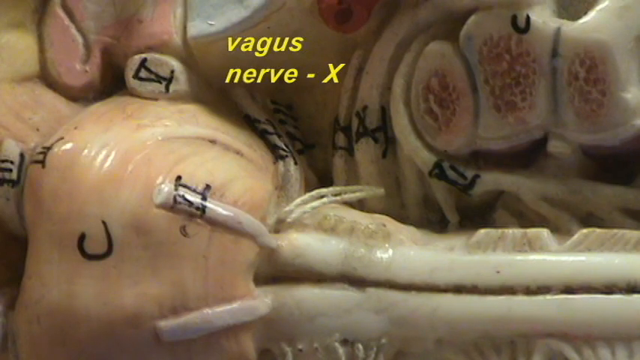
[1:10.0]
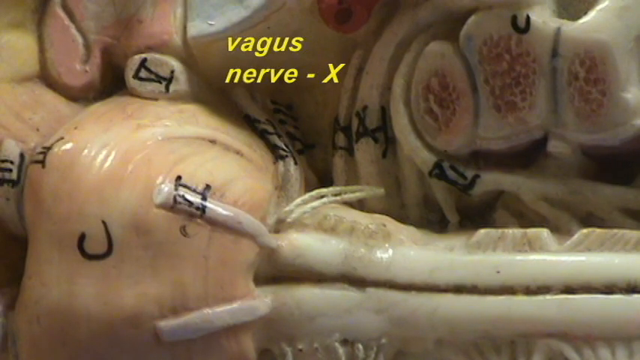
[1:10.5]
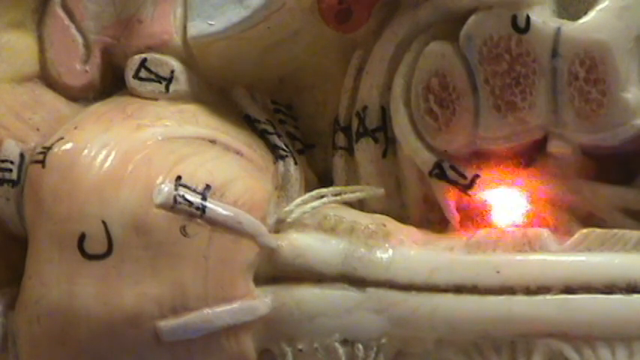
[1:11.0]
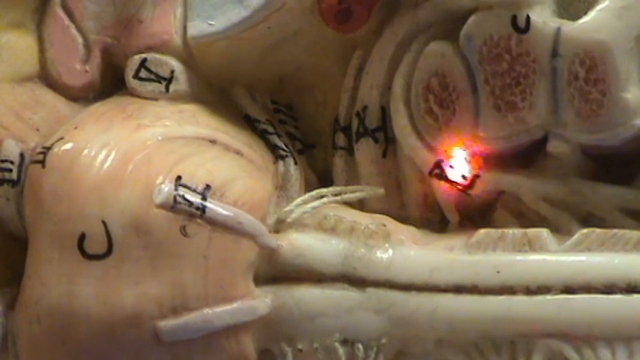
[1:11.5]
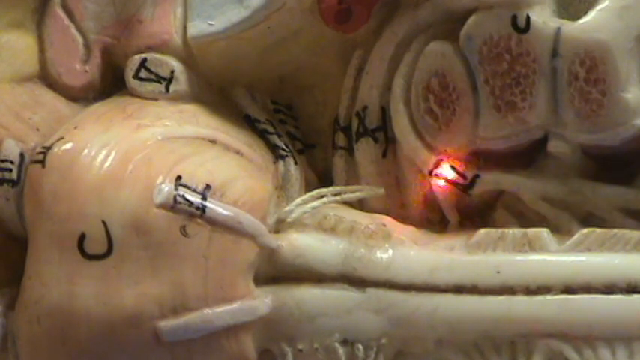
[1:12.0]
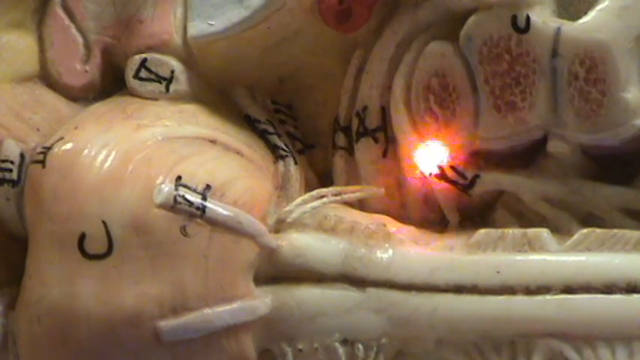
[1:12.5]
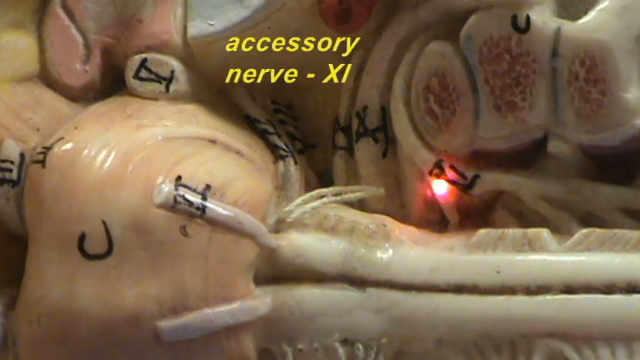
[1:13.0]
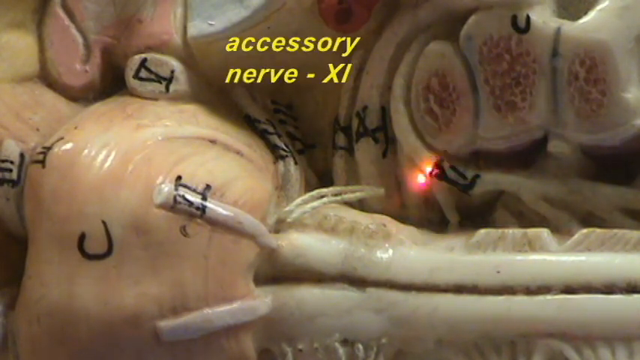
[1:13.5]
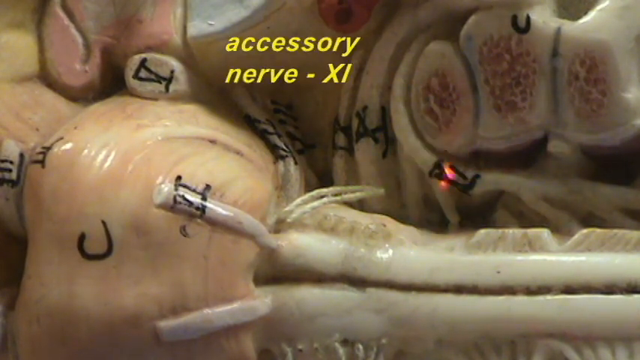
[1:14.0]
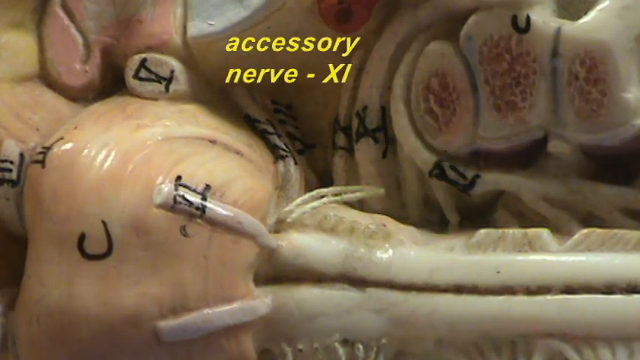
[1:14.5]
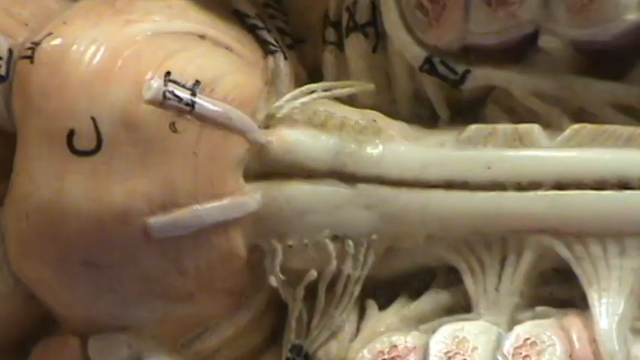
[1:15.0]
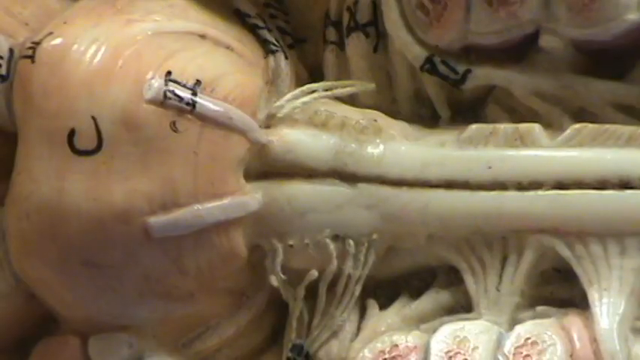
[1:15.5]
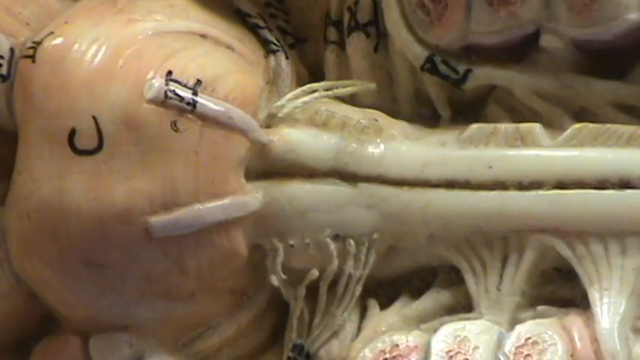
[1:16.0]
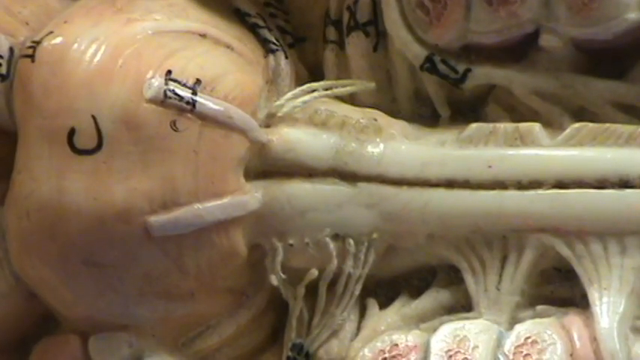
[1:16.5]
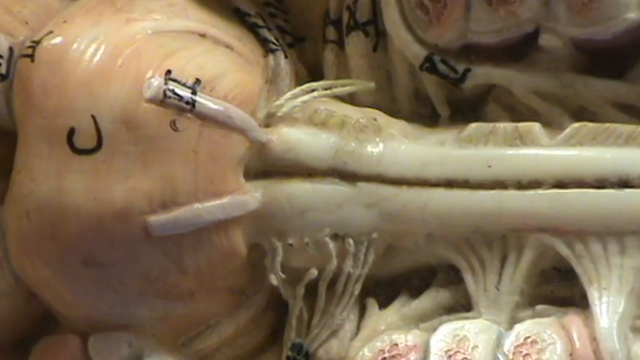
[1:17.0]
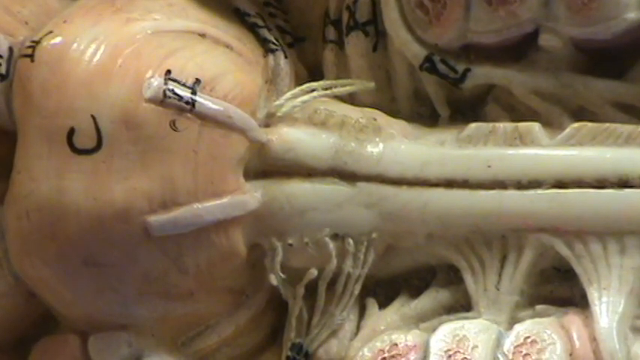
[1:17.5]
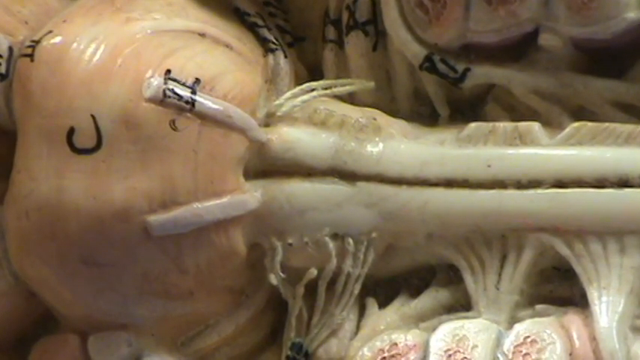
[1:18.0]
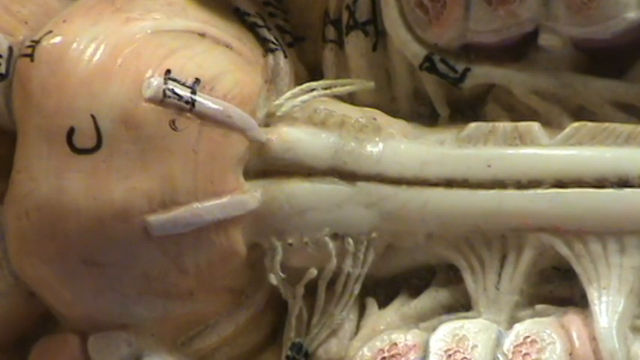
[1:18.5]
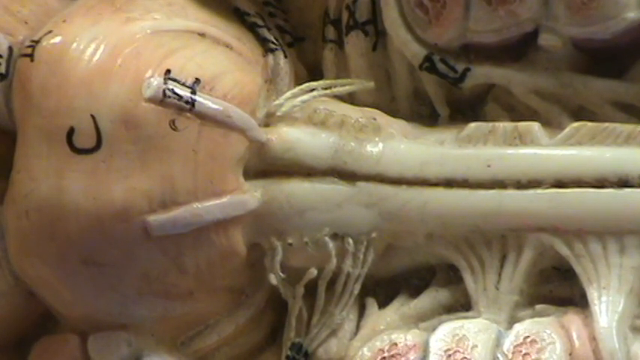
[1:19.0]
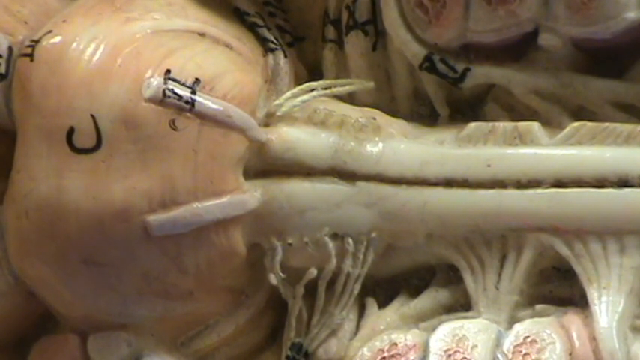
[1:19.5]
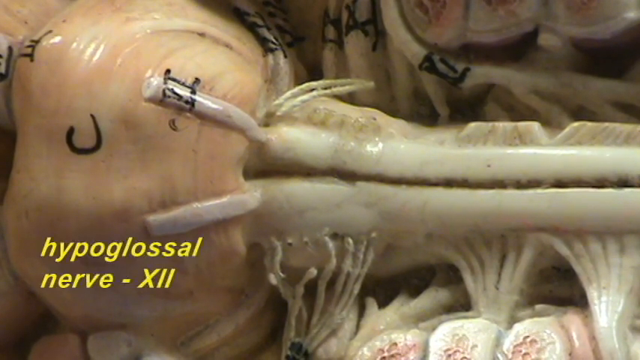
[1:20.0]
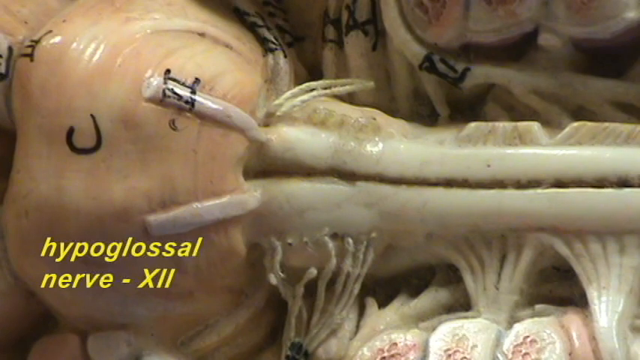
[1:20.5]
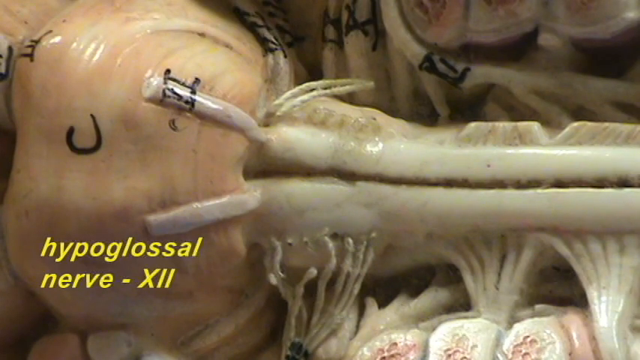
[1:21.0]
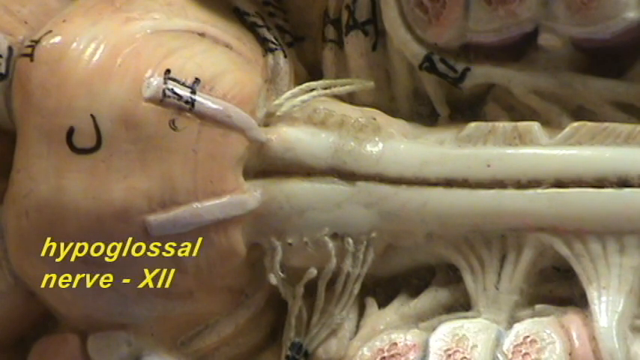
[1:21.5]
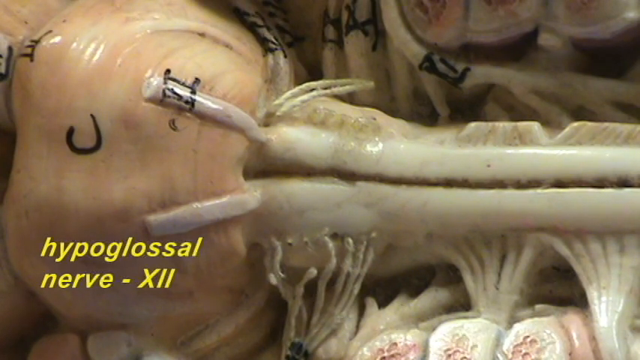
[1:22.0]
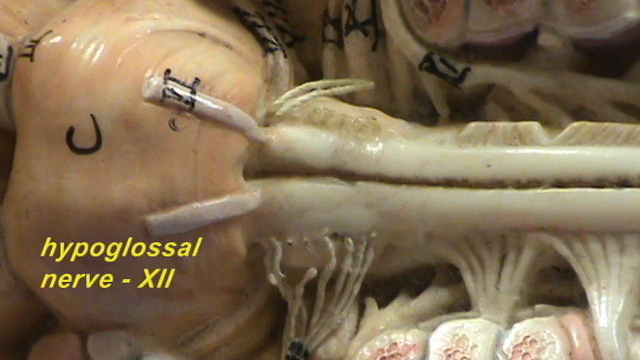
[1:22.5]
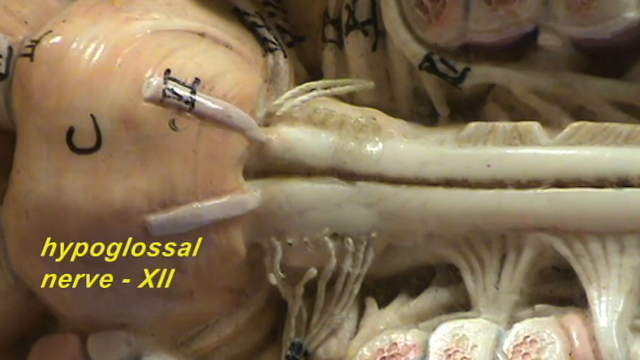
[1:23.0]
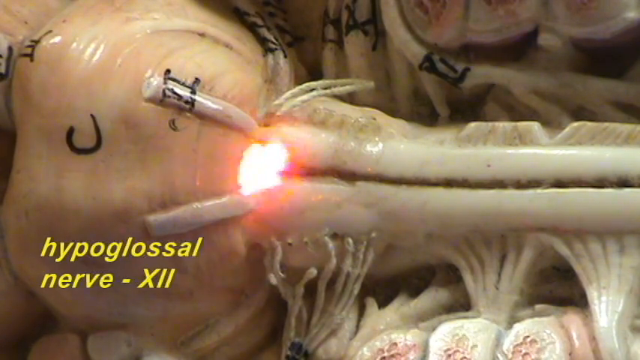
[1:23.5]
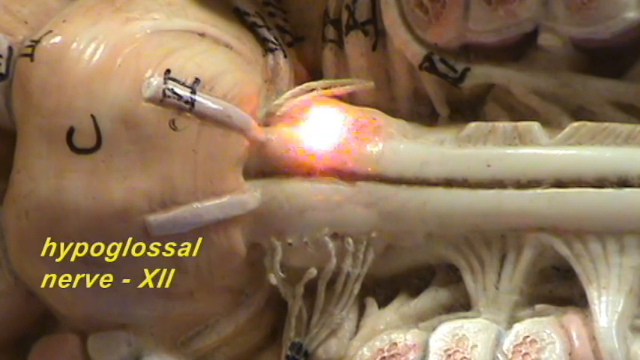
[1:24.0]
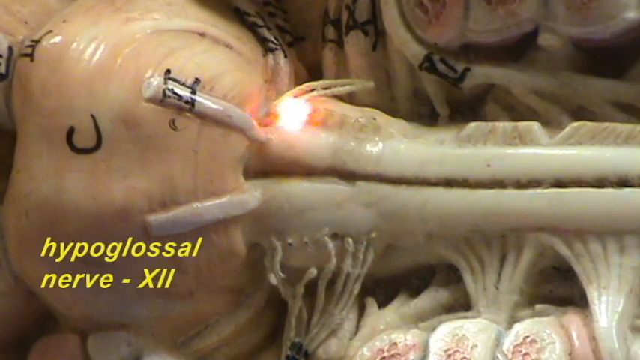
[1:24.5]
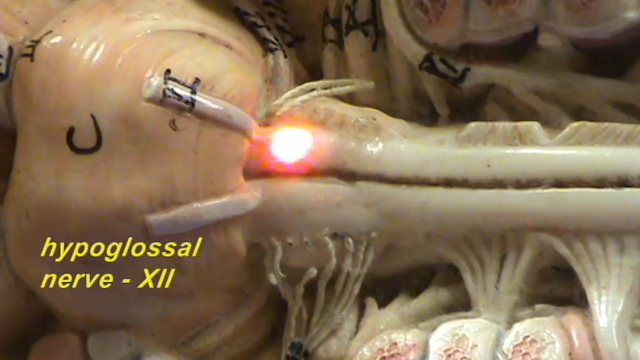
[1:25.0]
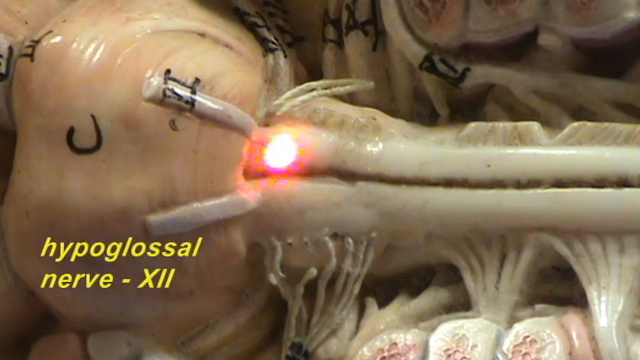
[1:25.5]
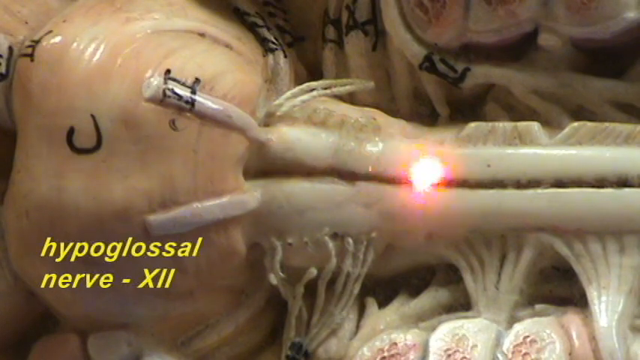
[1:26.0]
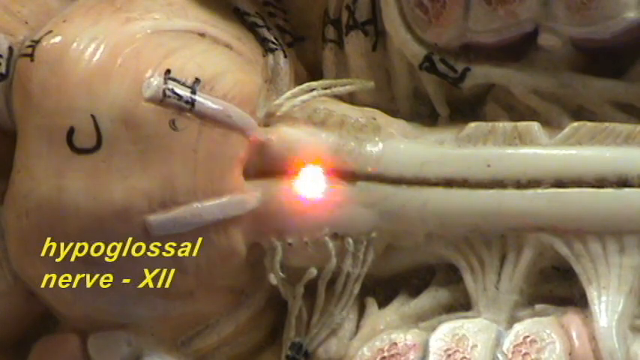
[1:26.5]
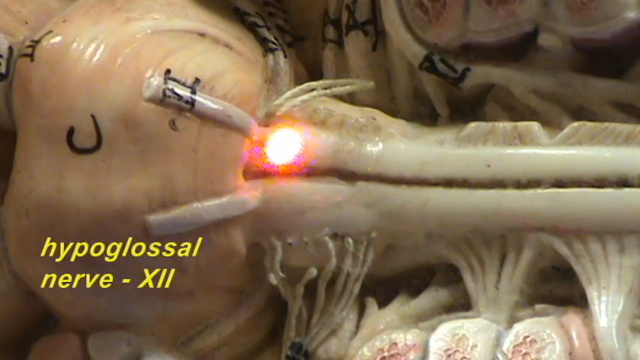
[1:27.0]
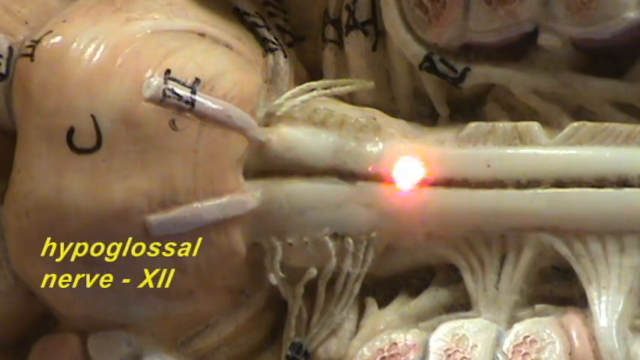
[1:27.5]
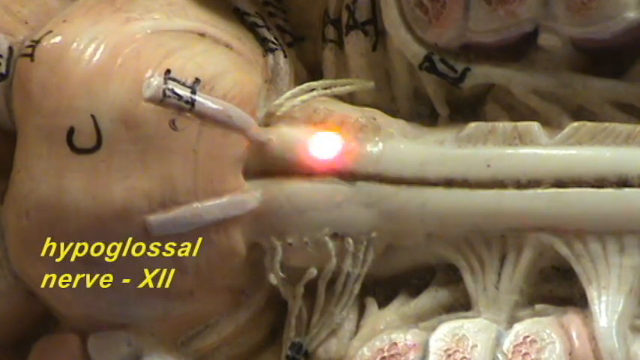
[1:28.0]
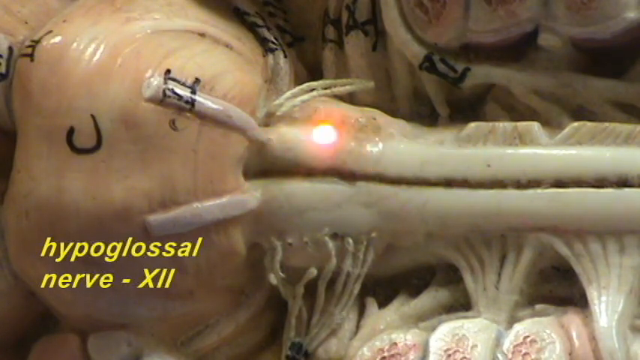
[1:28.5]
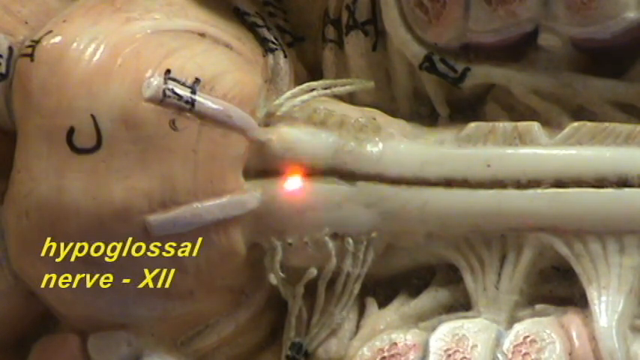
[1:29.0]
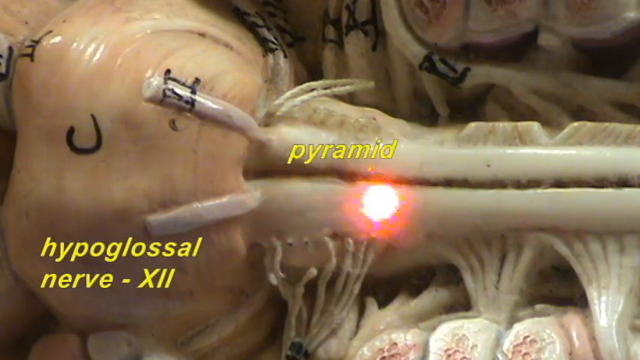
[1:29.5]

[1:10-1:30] In the medical instructional video, a laser pointer is pointed at areas of the human anatomy model. The pointer is not steady and moves around very rapidly. The model is not a live body but a one-to-one reproduction of human anatomy. The title at the top of the screen reads "Accessory nerve XI," and the laser pointer points to a specific area inside the model. The next title appears in the lower left of the screen: "hypoglossal nerve XI." The X is apparently a marking put onto the model to point out its different areas. The laser pointer points at the very top of the spinal cord, moving left and right and up and down along that top part.